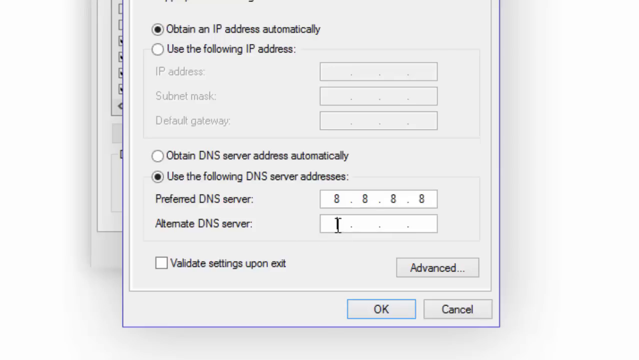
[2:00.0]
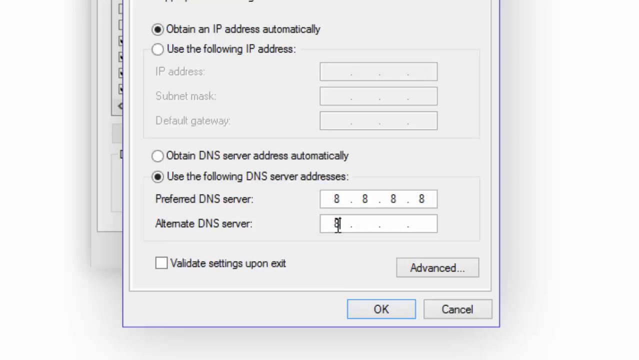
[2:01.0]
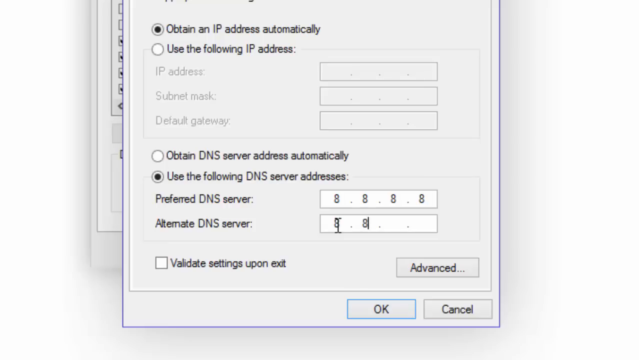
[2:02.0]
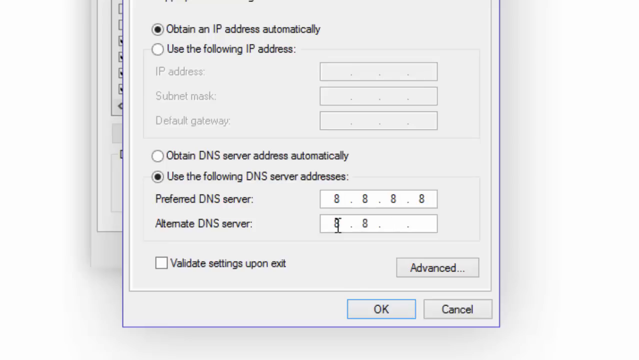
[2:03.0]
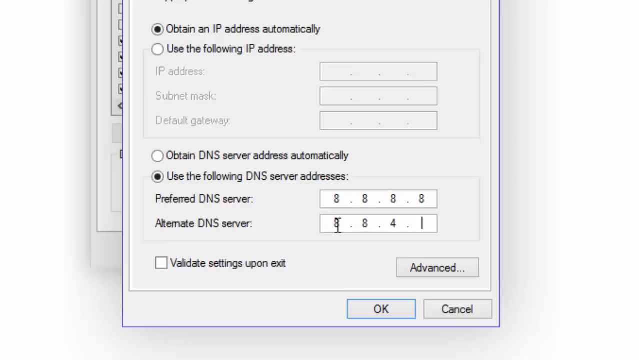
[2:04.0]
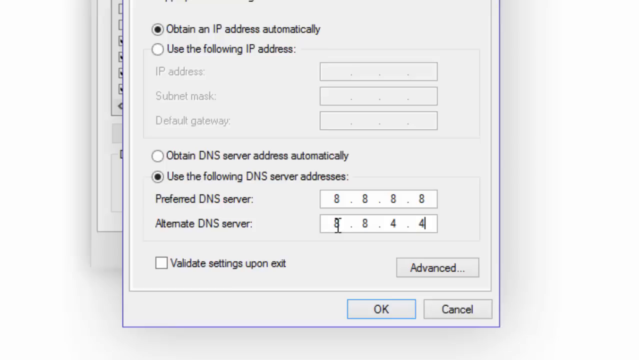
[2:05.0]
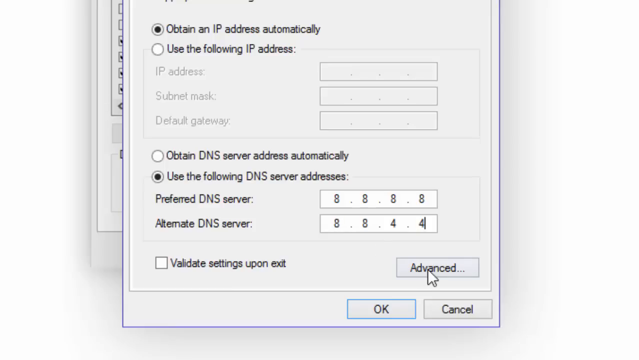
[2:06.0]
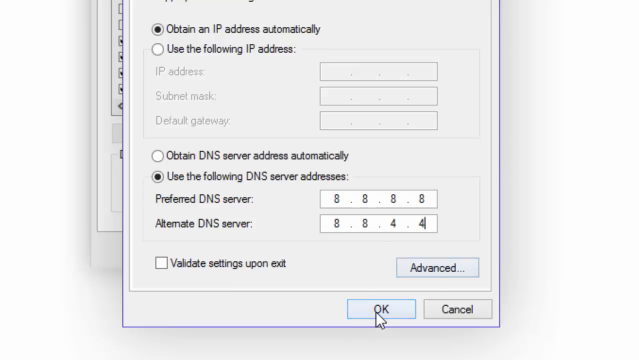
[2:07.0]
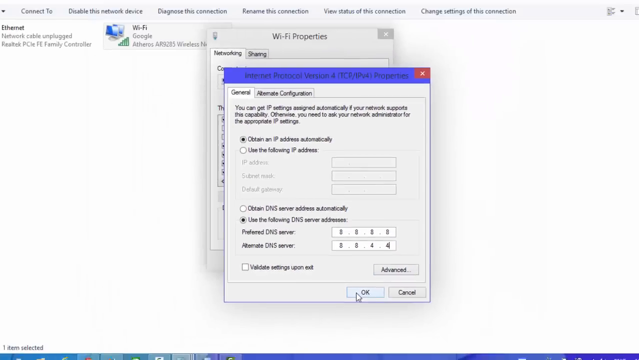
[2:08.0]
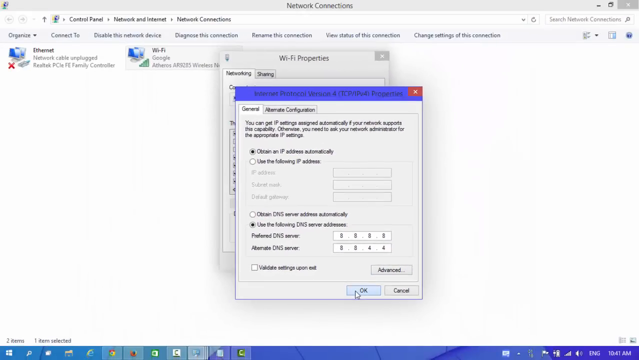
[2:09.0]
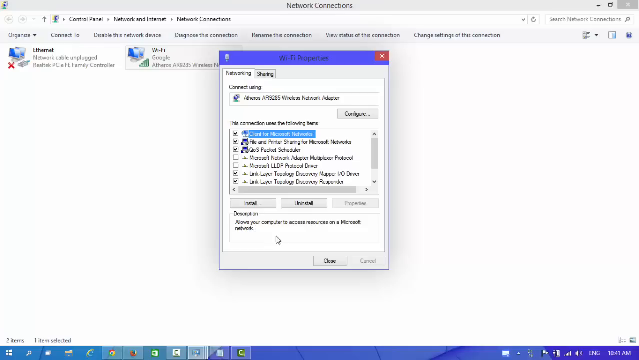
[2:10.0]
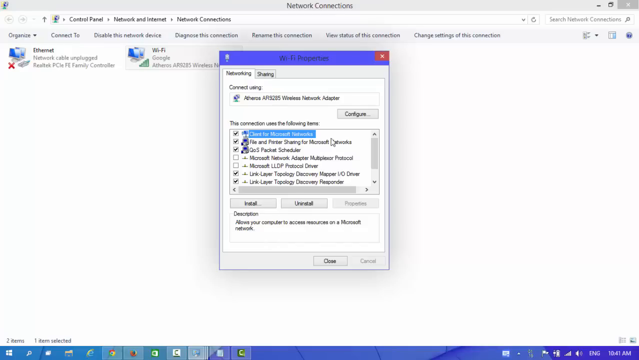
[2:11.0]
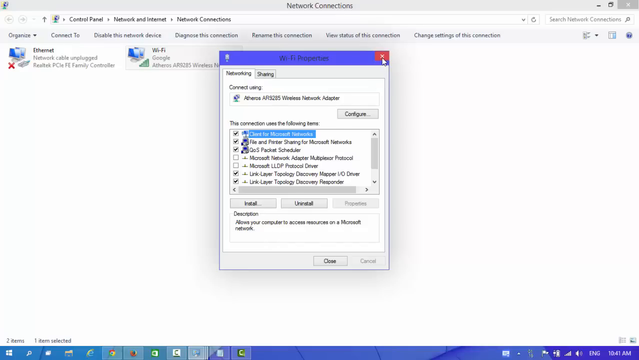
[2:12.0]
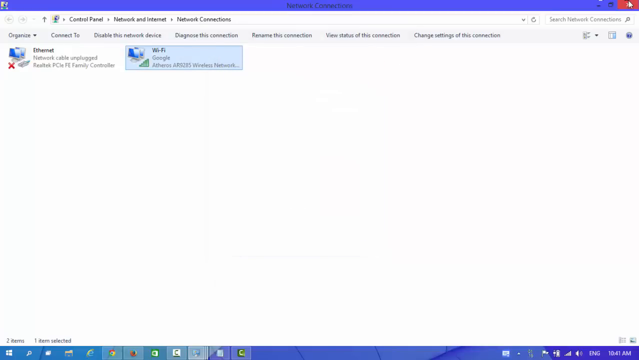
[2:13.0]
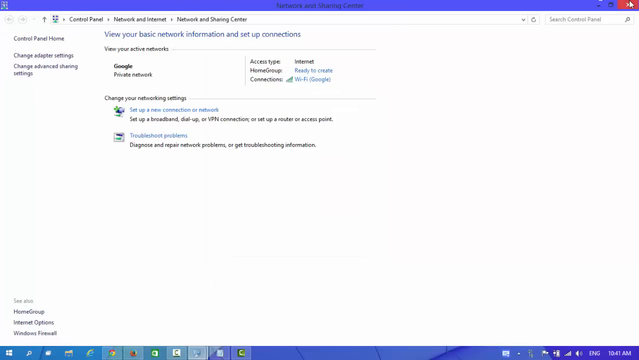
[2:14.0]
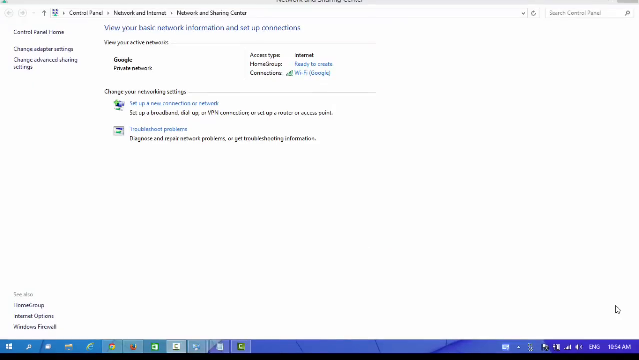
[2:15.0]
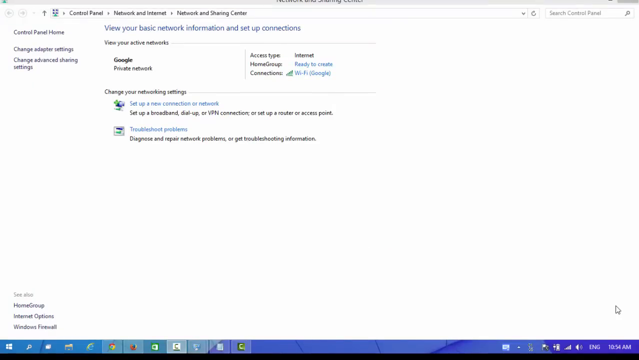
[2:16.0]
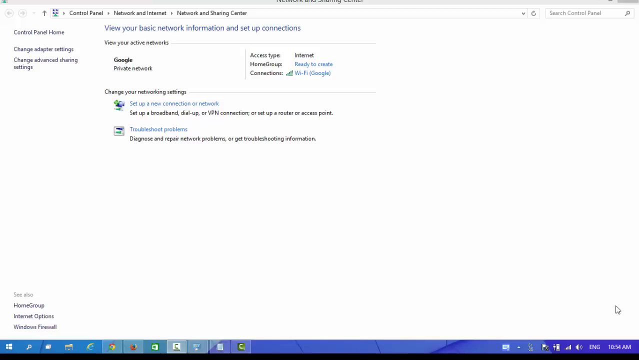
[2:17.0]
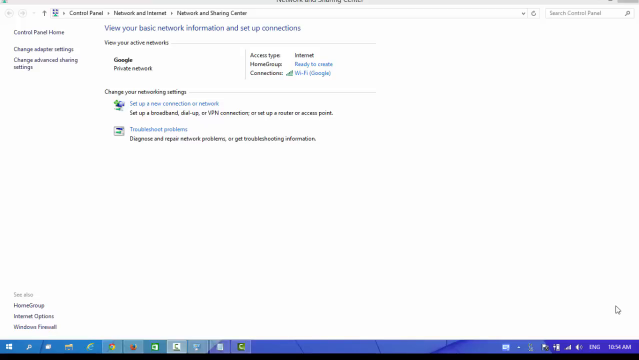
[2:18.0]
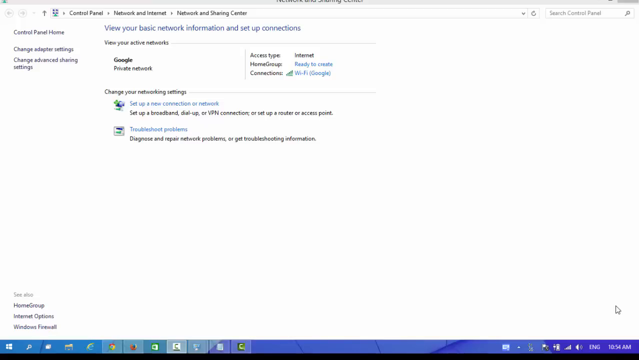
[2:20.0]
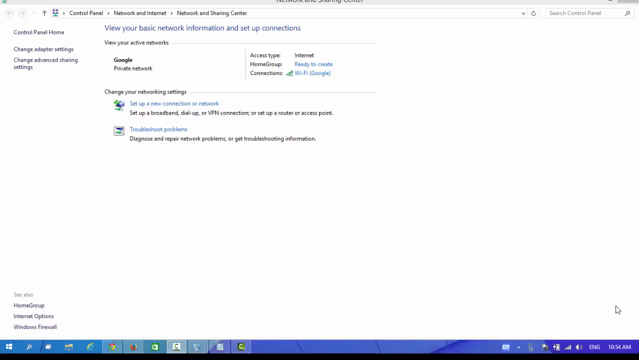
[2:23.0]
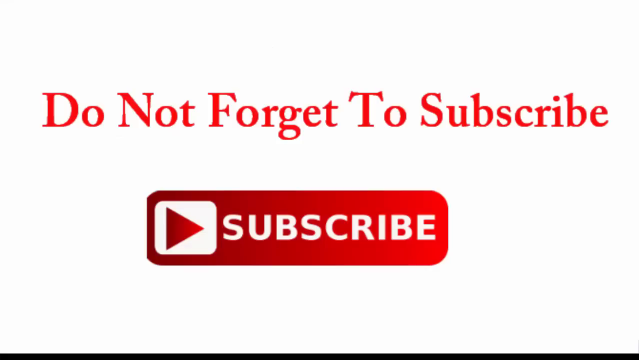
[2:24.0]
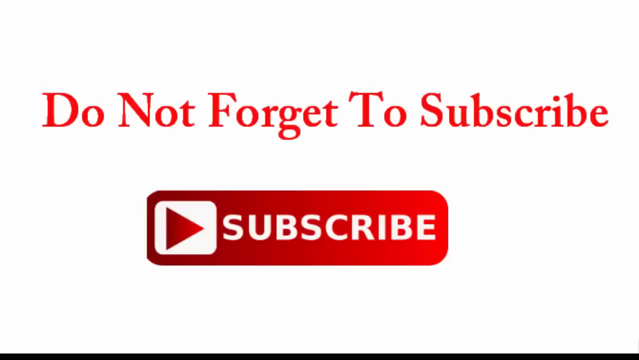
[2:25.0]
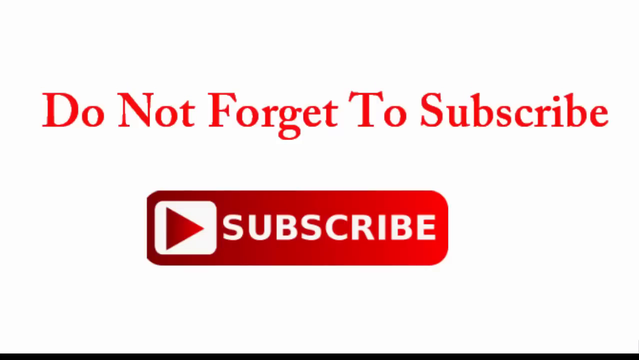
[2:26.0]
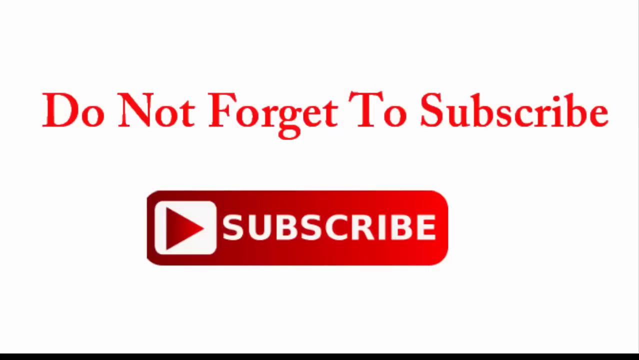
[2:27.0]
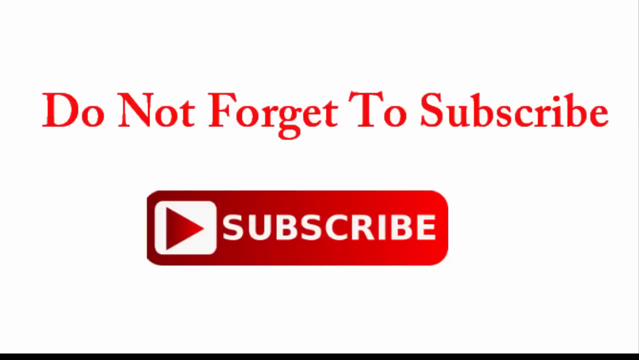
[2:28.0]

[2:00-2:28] With the option to use the following DNS server addresses selected, the user enters 8.8.8.8 for the preferred DNS server and 8.8.4.4 for the alternate DNS server. They move down to the "Okay" button, hover over it, and zoom out a little so the whole page fits on the screen, then click "Okay." The Wi-Fi properties window returns, and they click the red X icon in the upper right corner to close it. They then close the network connections window, and the video returns to the network and sharing center. The mouse sits still and nothing happens for a moment. Then the screen switches to a new page that says "do not forget to subscribe" with a big red subscribe button underneath.